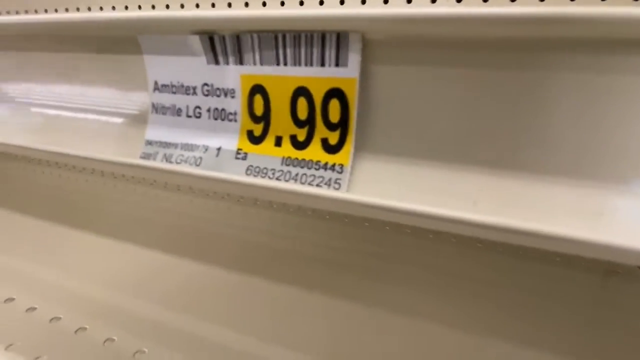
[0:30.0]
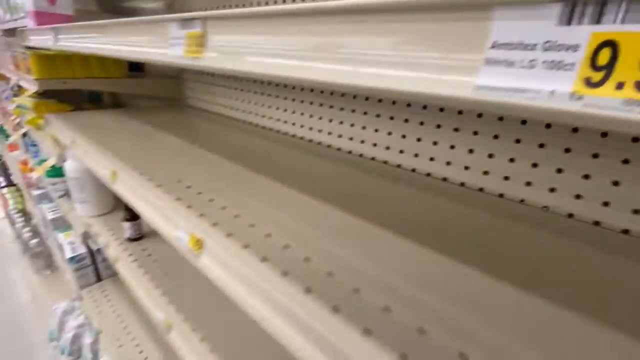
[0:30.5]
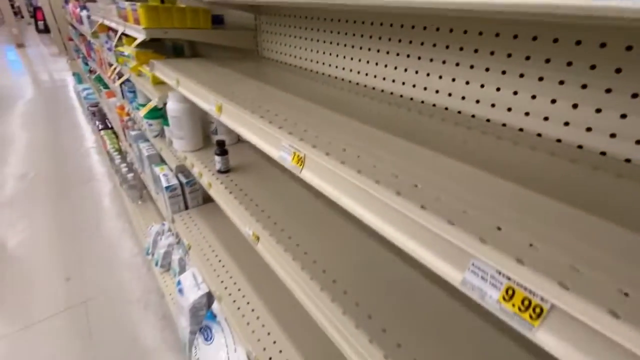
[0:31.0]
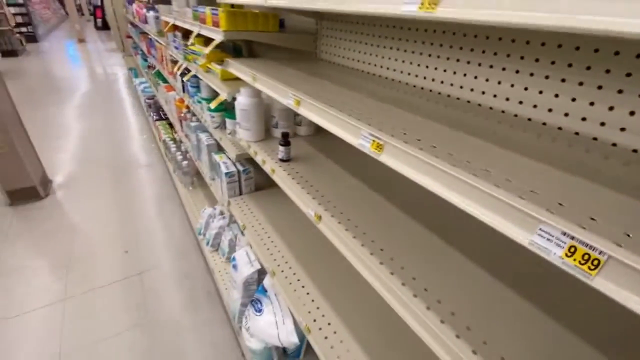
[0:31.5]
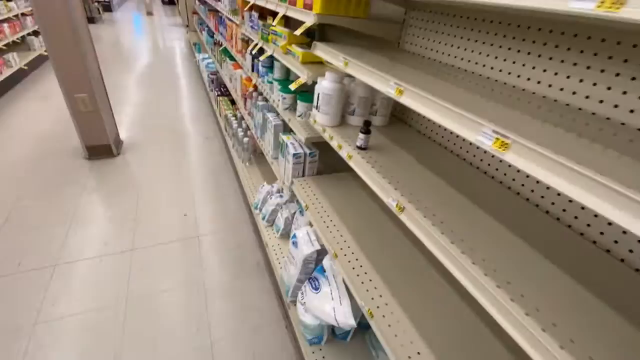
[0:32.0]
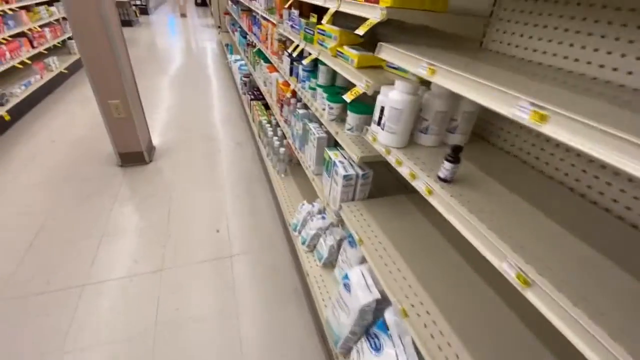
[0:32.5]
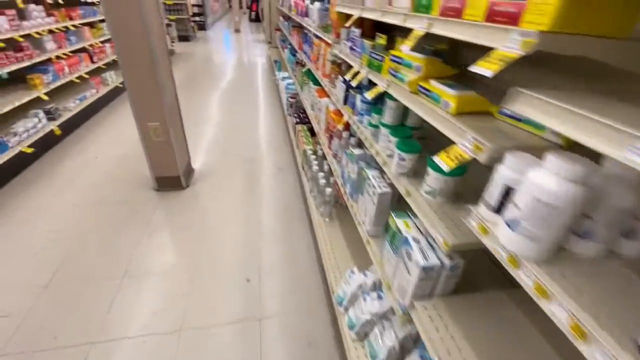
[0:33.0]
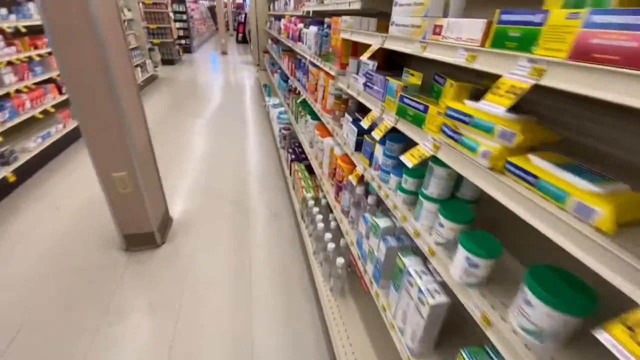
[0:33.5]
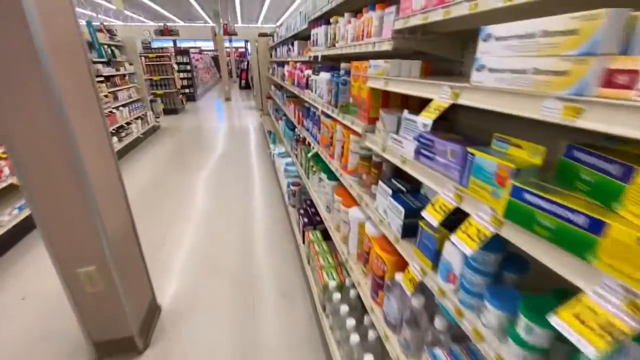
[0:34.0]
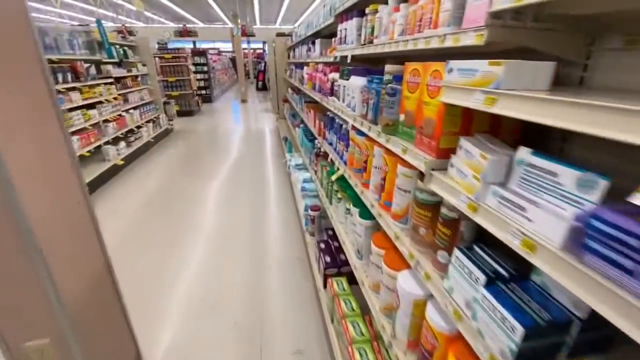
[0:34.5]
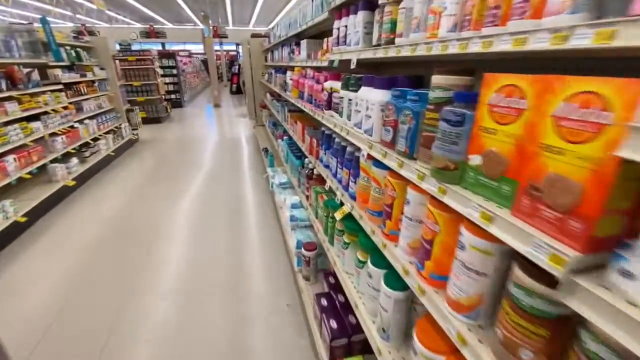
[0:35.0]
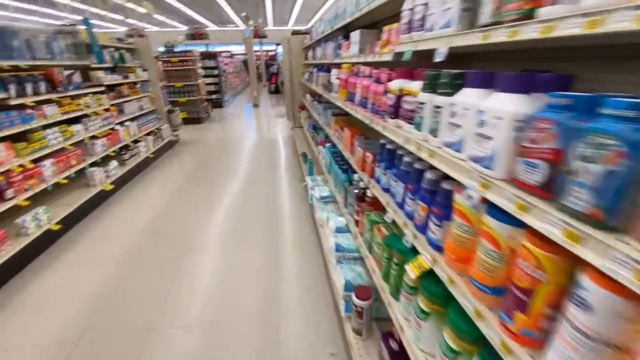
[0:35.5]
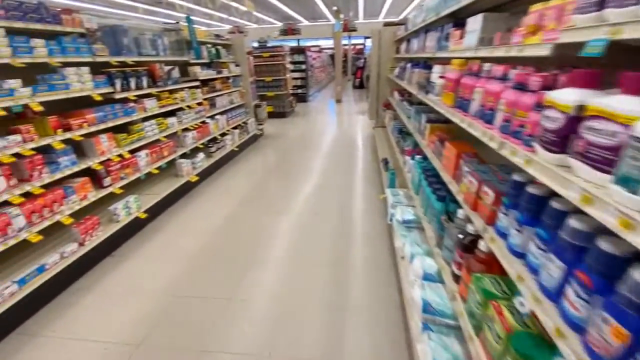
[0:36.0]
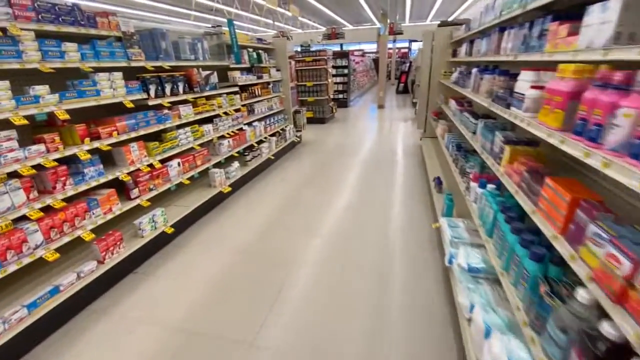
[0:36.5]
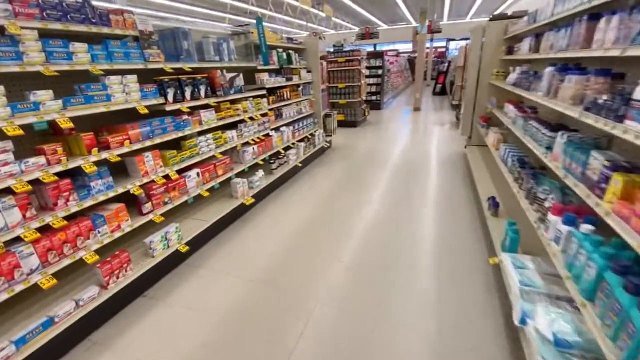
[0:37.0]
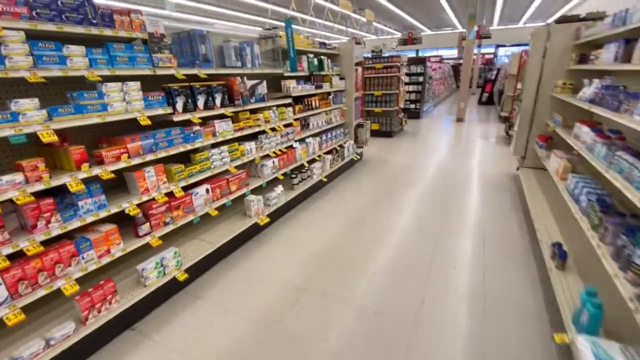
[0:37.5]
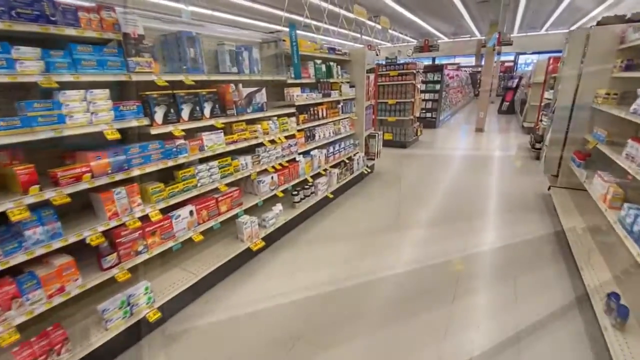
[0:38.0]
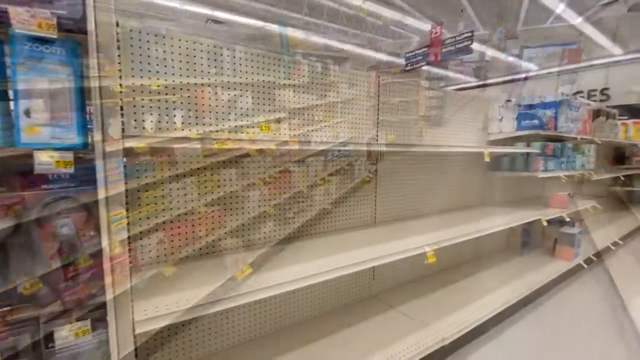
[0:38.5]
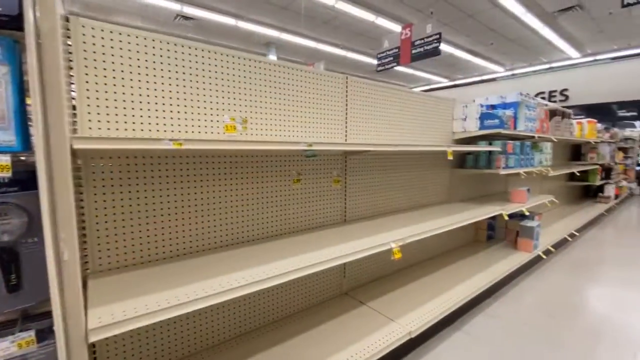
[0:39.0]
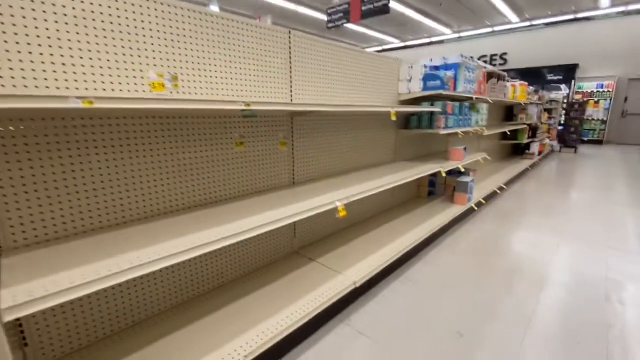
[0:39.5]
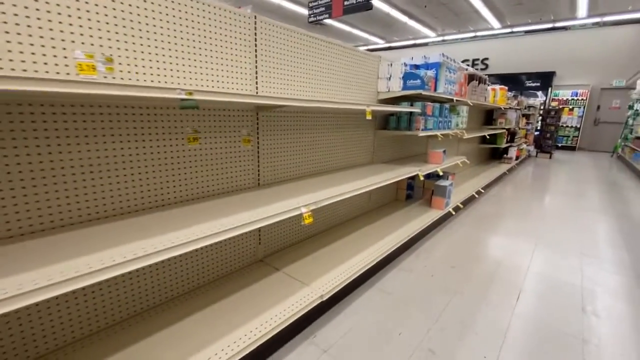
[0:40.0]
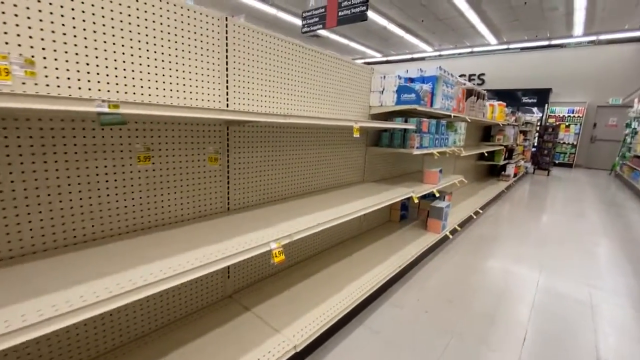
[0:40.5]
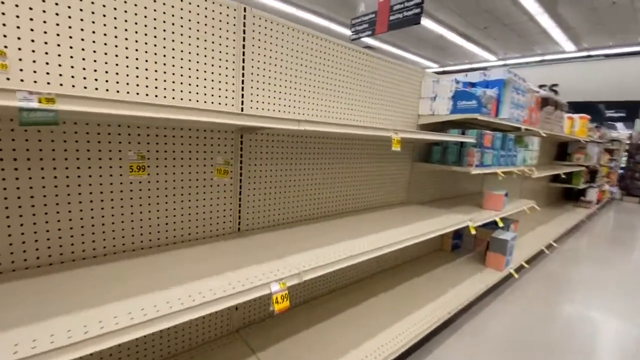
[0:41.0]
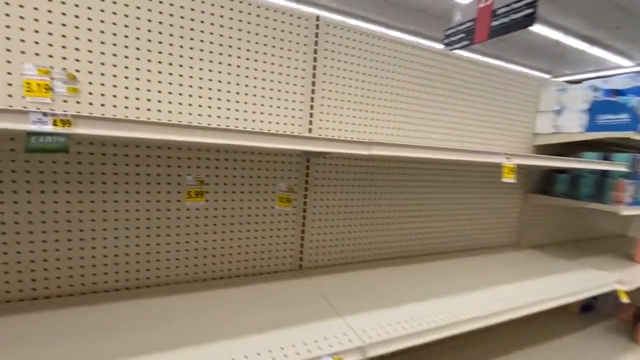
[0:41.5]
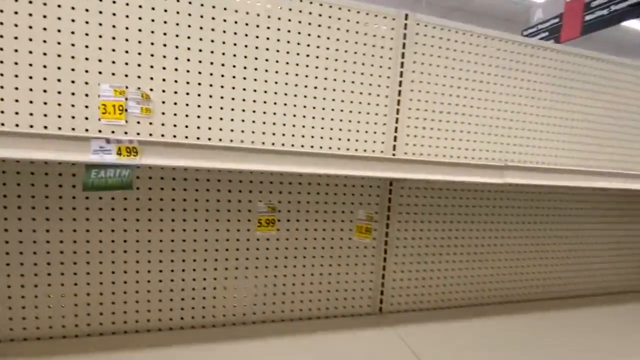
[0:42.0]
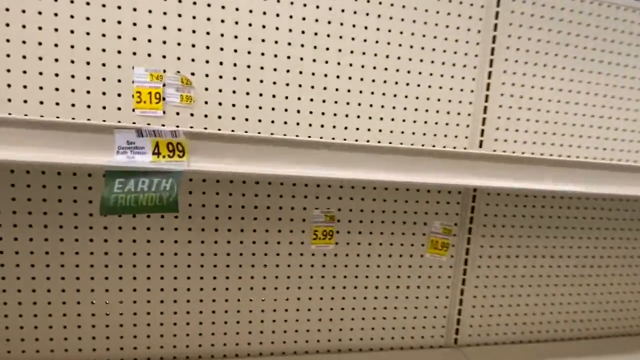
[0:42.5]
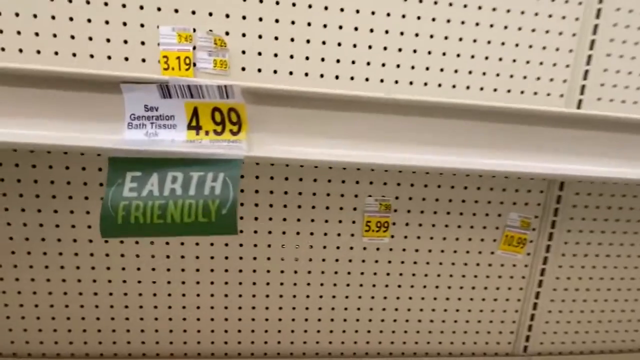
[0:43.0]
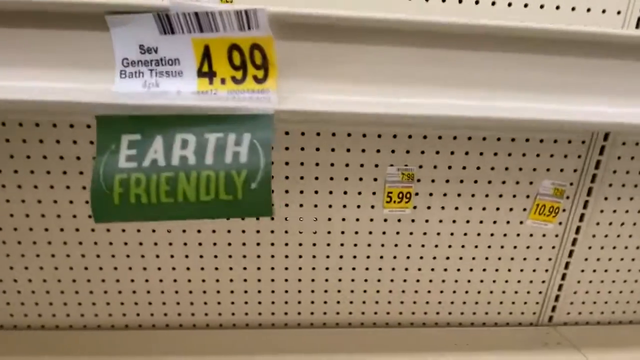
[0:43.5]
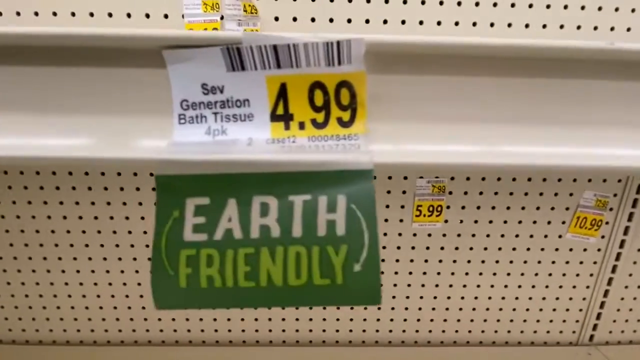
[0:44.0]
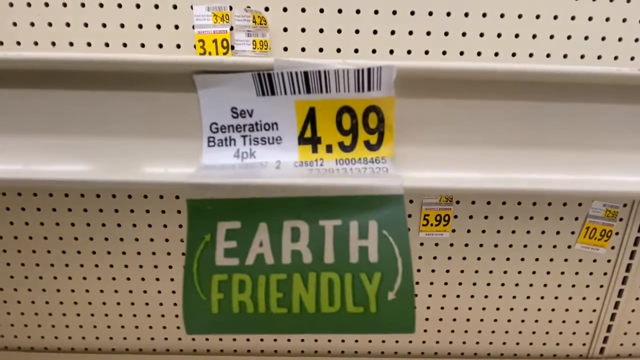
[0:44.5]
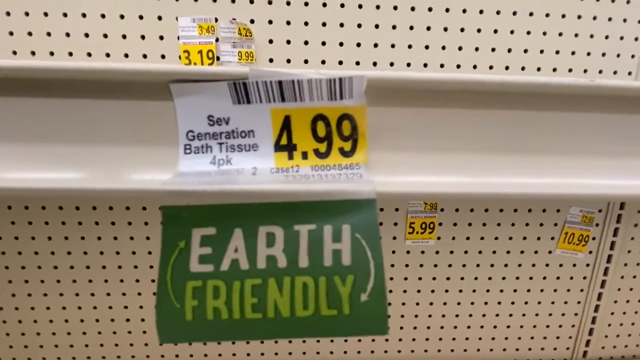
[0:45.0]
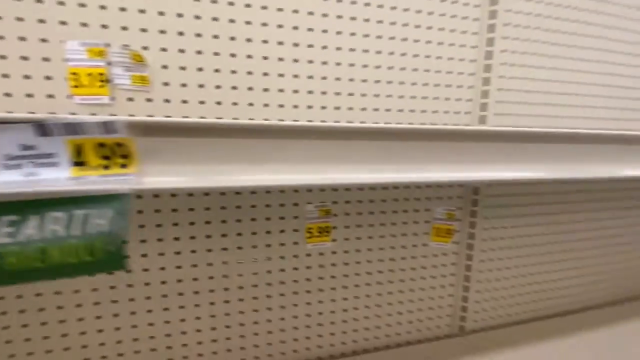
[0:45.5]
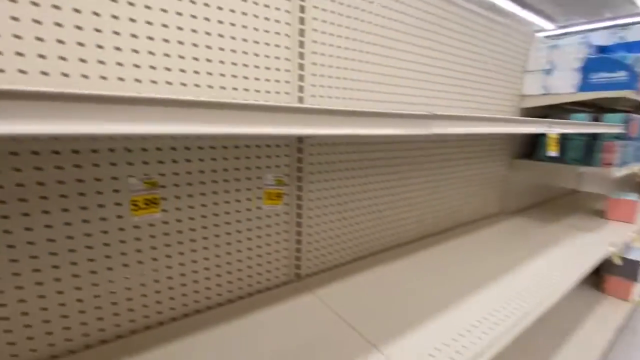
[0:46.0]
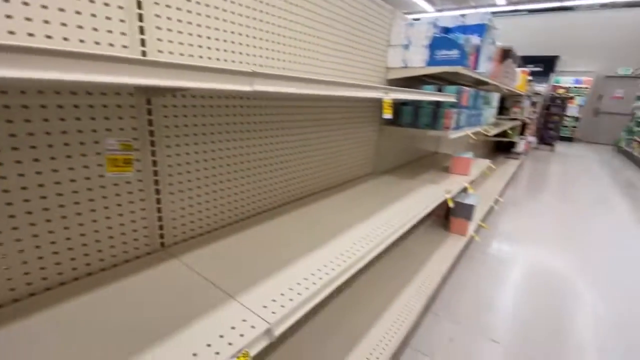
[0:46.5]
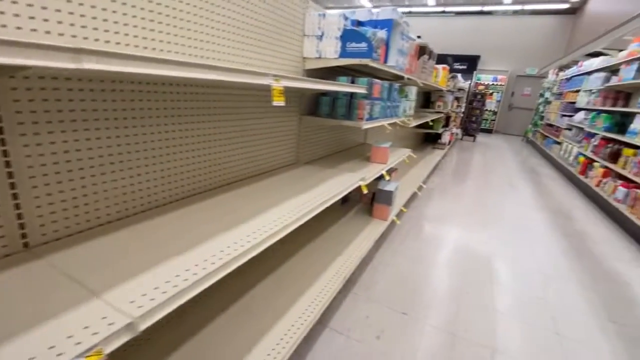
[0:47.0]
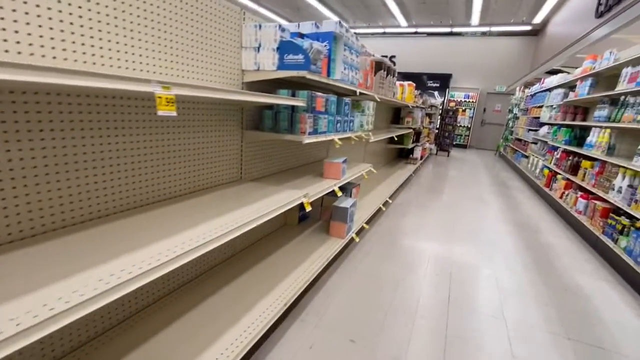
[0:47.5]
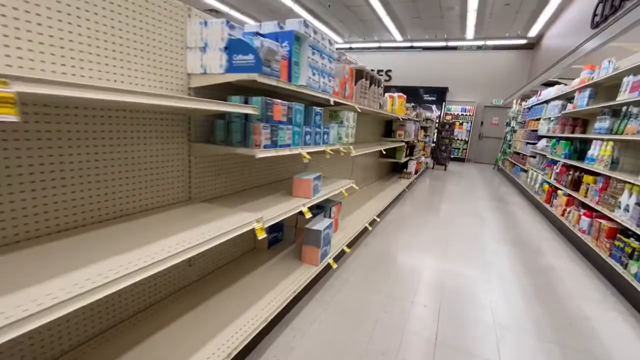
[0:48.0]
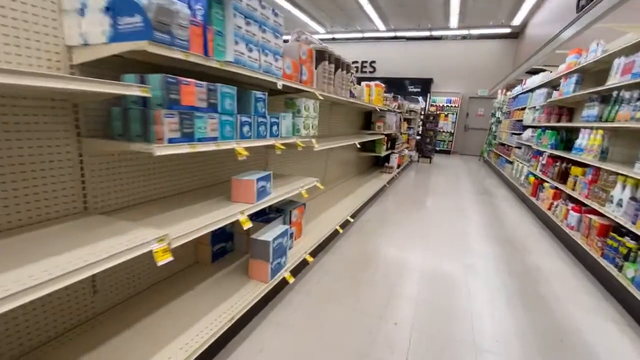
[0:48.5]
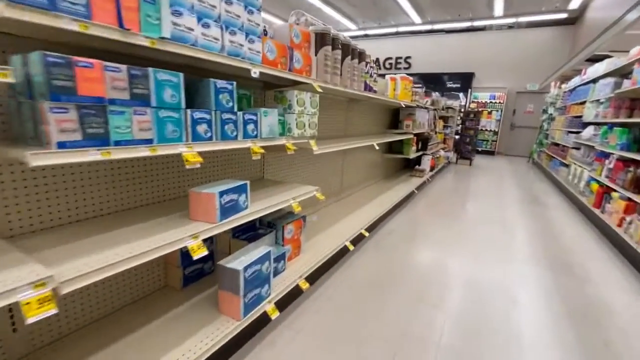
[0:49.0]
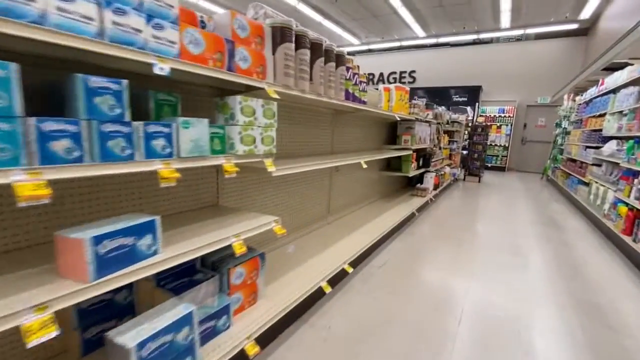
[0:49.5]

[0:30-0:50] The camera continues down the aisle, now pointing at the left side, where about three shelves are totally empty. One label says "Earth-Friendly 7th Generation," and most of the shelves here are empty, with some empty shelves on the right as well. On the left there are just three shelves, all empty, with an unidentified 7th Generation product; the products are possibly larger. There is a post in the middle of the aisle. This is a different aisle, with the three shelves on the left where the 7th Generation product is. Further down the aisle on the left there is some product that cannot be identified because the camera moves pretty fast.